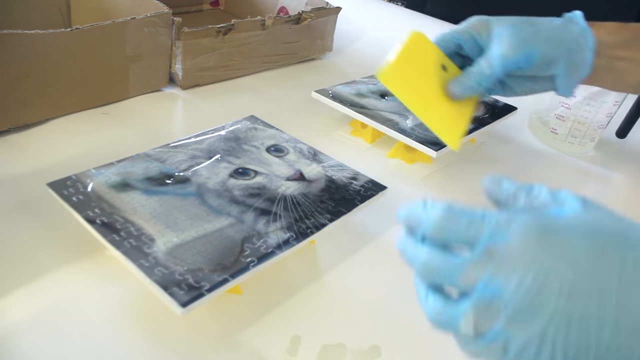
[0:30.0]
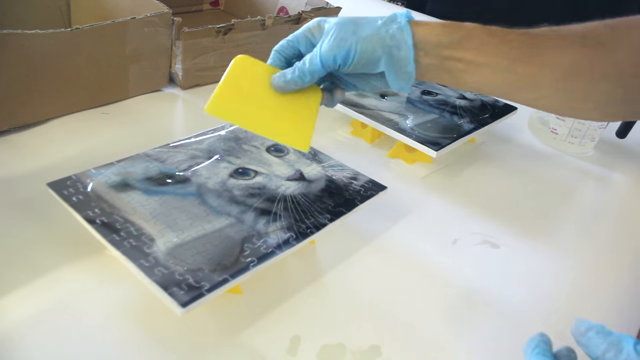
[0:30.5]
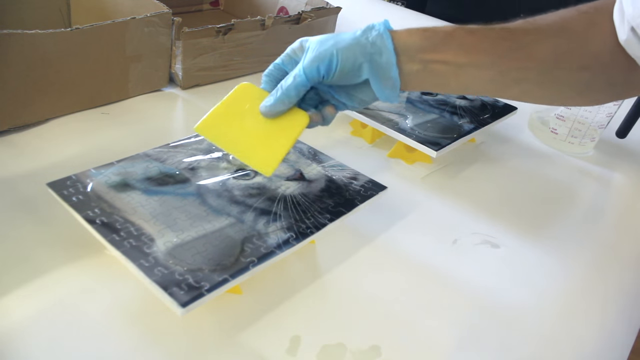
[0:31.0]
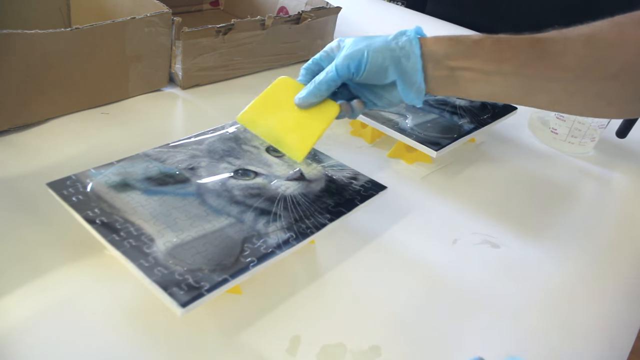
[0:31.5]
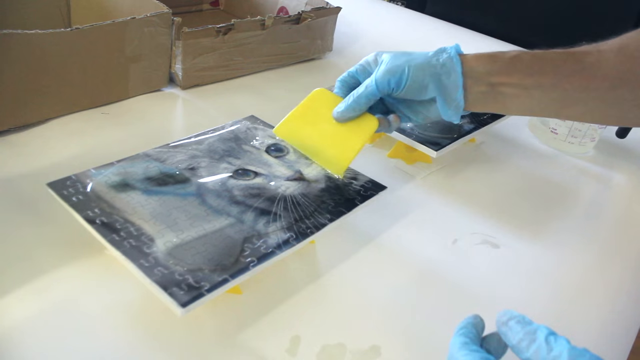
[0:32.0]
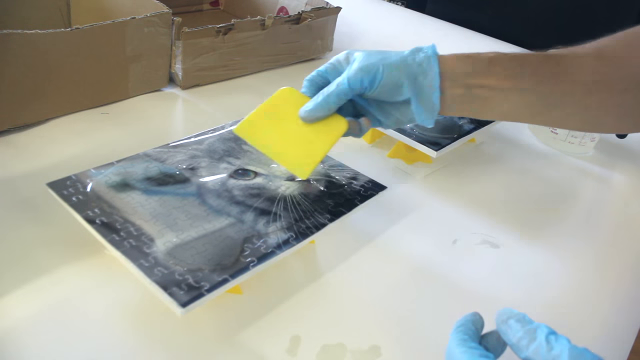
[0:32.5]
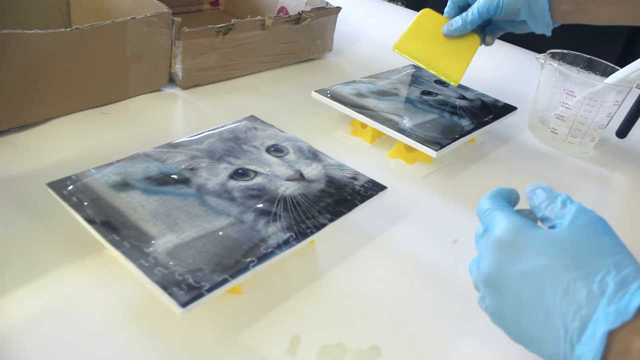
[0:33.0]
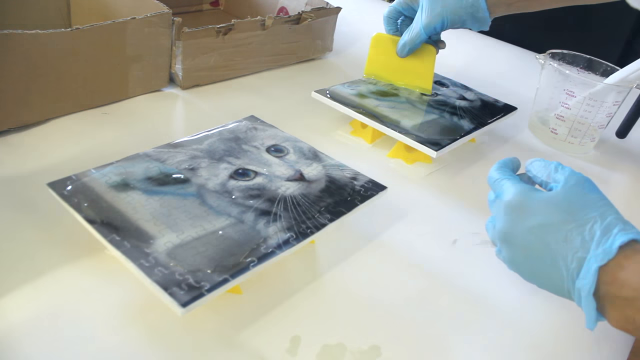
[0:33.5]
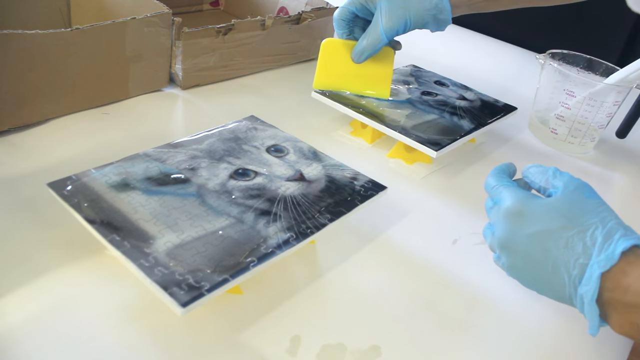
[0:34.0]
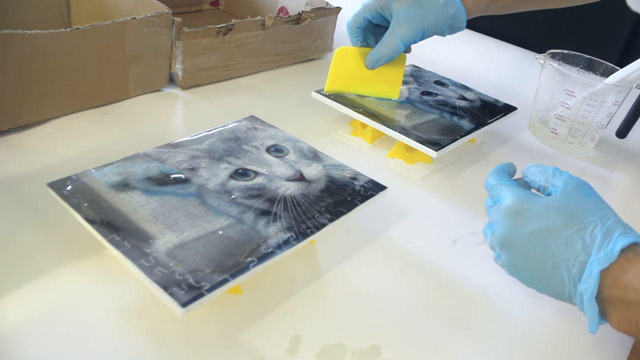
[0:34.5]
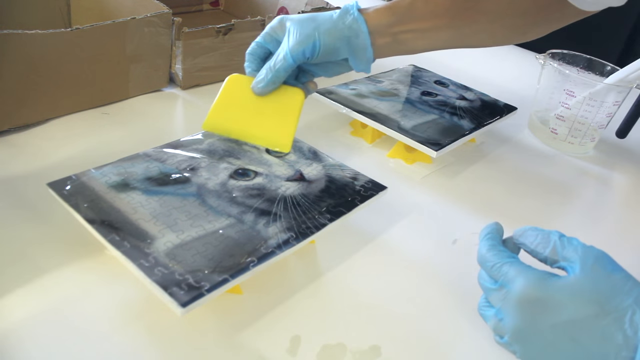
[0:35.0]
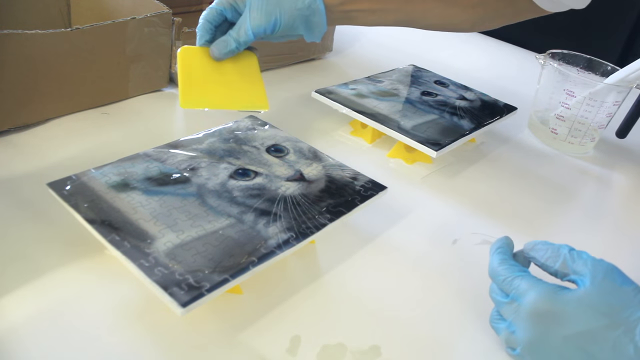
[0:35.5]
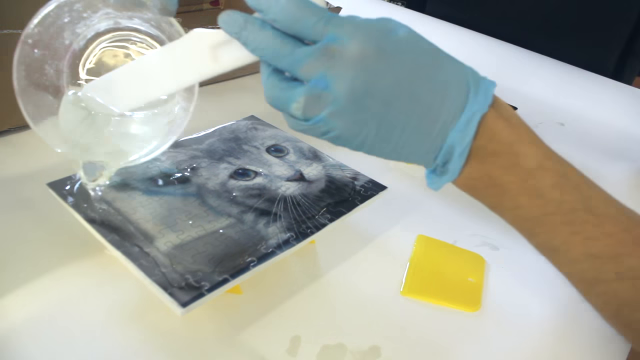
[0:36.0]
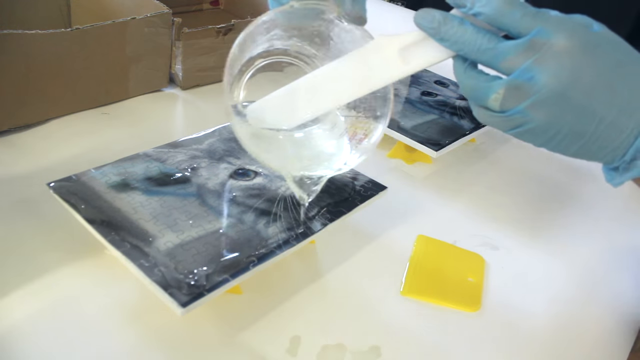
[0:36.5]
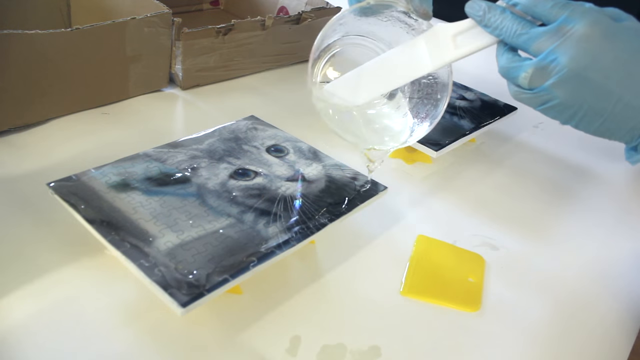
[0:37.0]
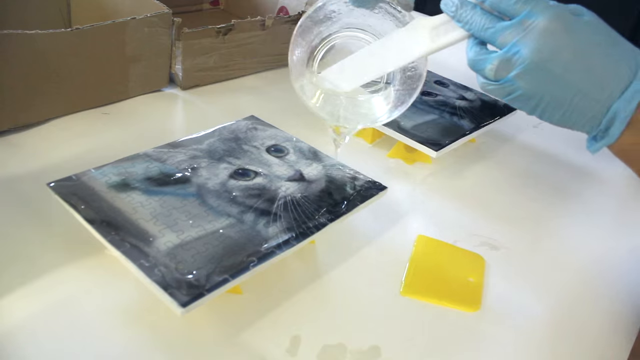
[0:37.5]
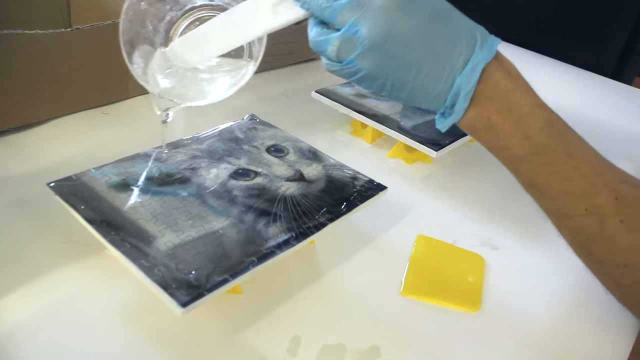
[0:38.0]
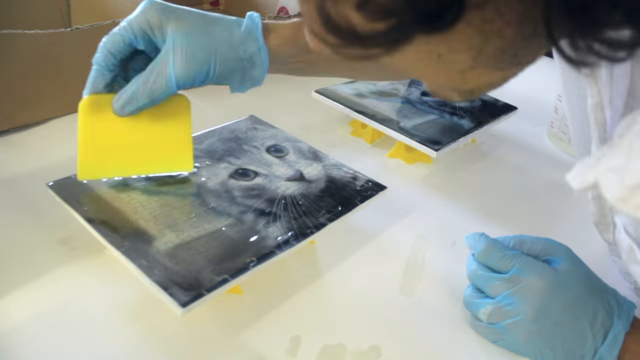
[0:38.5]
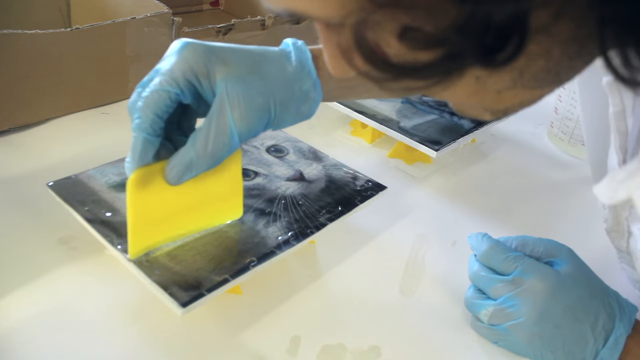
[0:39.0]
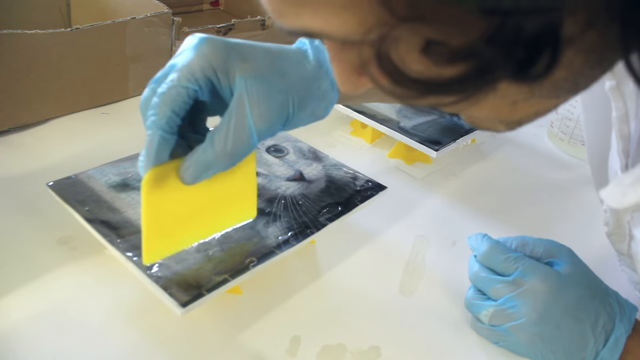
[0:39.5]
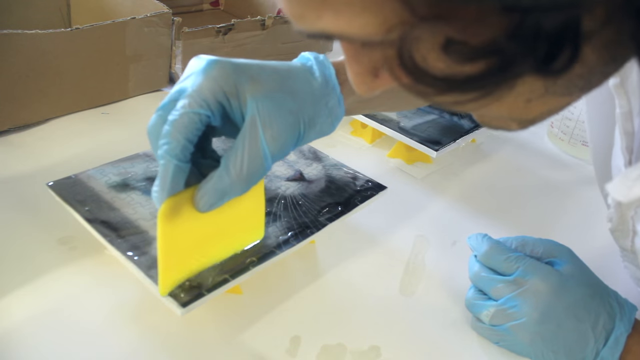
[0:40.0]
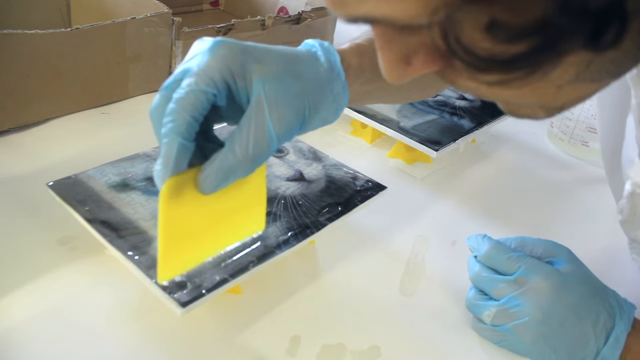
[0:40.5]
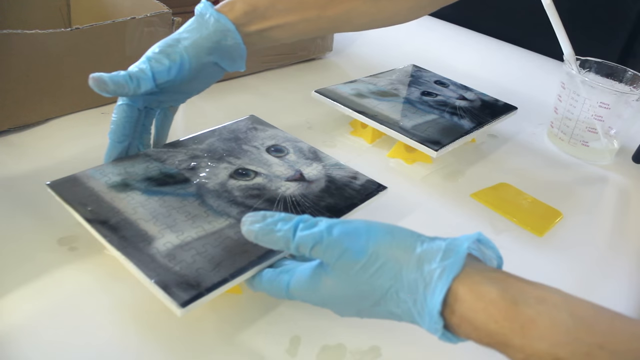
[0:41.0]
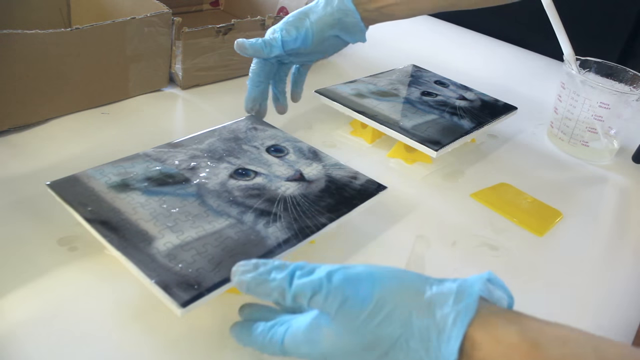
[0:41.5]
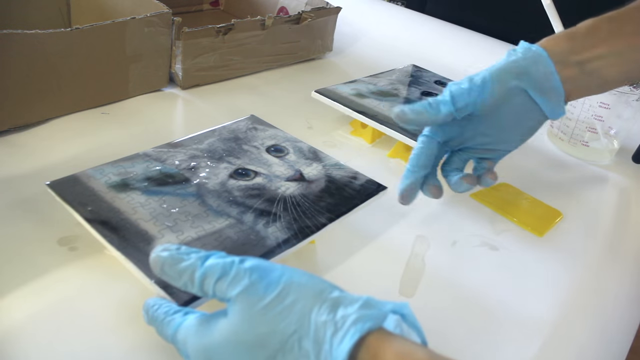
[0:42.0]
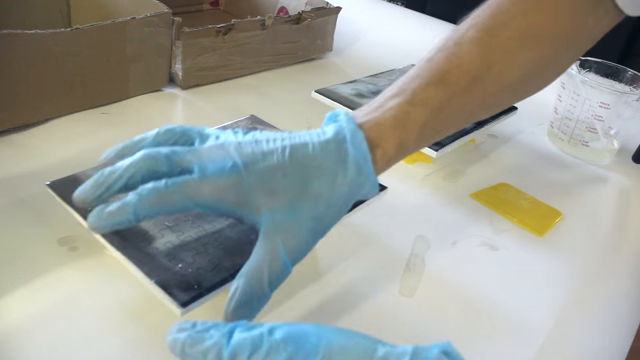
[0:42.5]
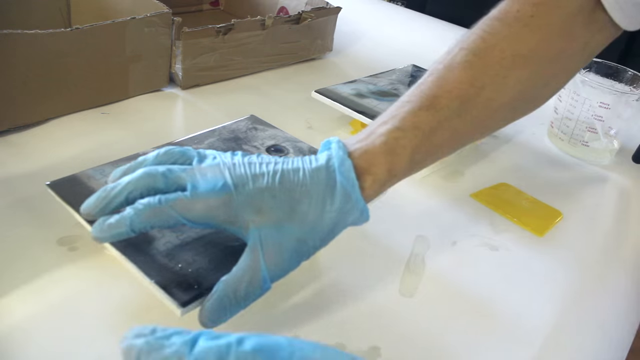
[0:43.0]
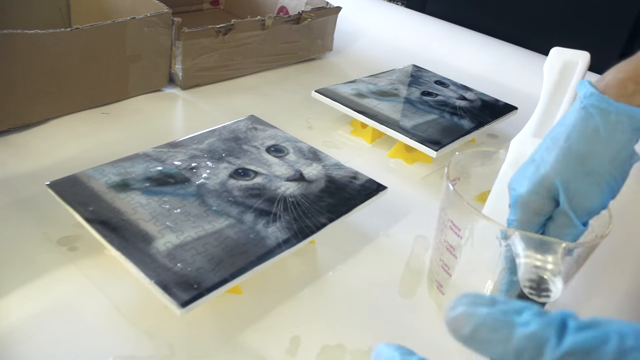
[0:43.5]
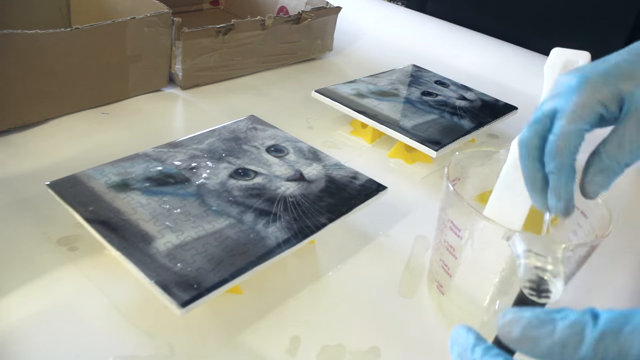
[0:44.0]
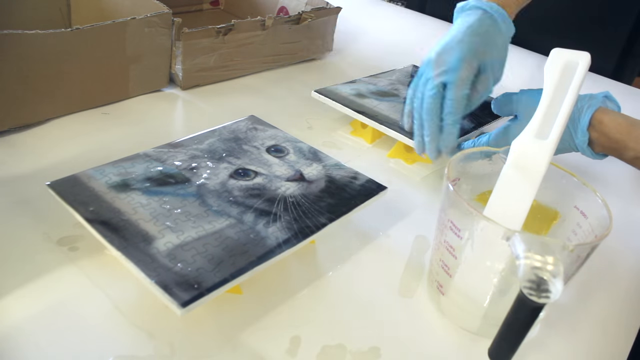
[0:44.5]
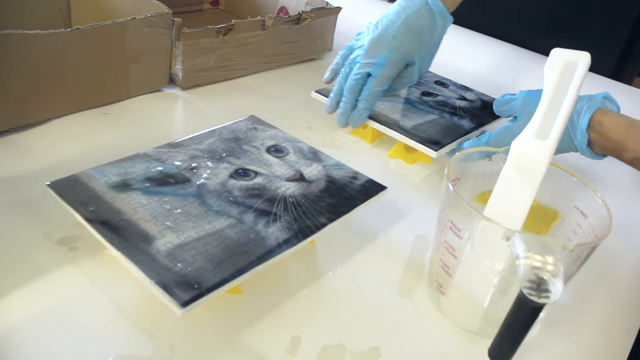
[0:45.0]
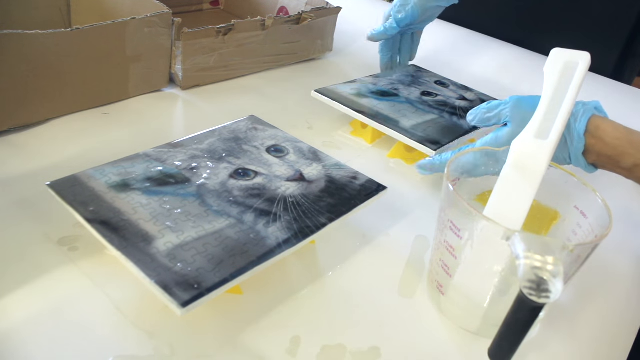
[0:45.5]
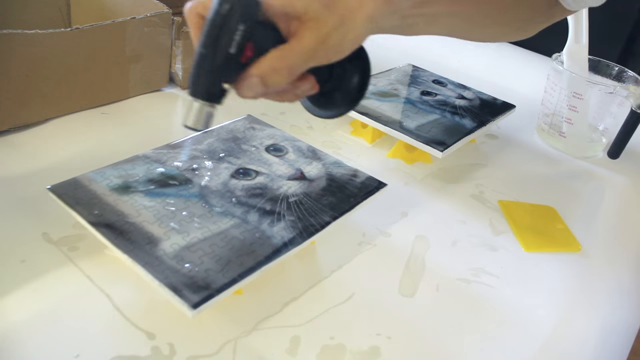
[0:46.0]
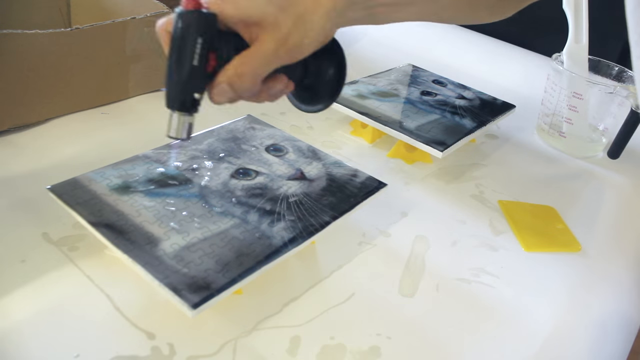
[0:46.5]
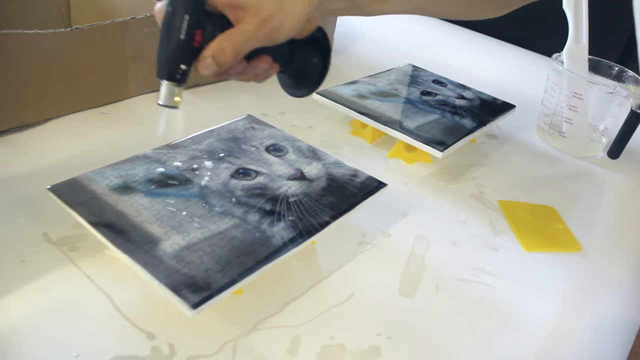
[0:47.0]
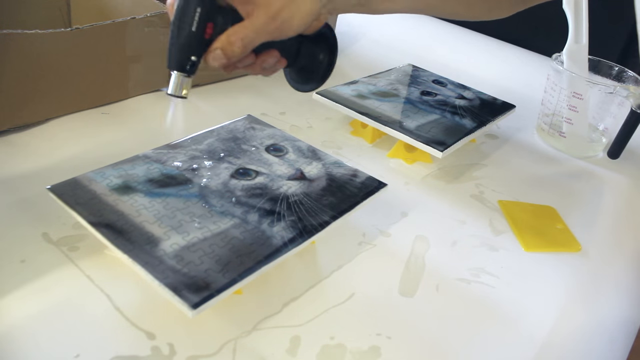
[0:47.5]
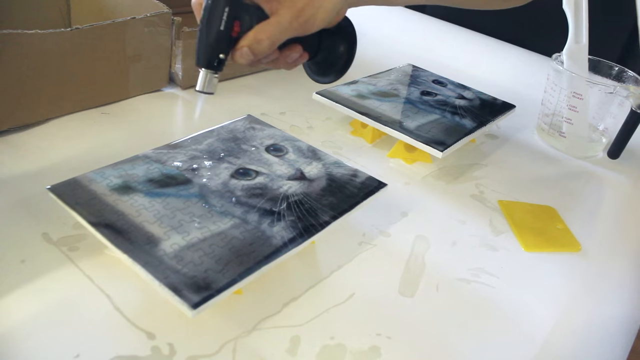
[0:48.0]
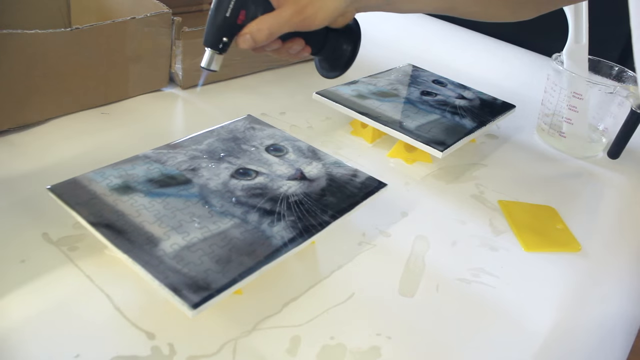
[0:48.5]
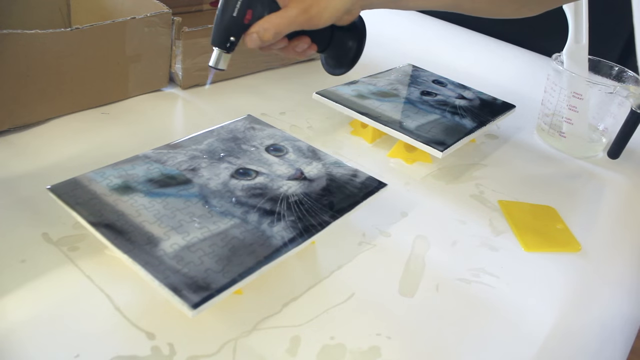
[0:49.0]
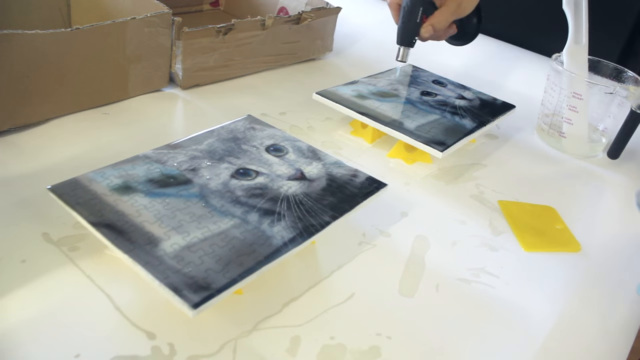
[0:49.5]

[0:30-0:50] The white man, still wearing blue gloves, takes a spray and sprays the two cat frames, which are black, white and gray. He rubs the frame with a yellow sponge, working patiently and slowly, and uses a jar with water. The substance he applies is not exactly water and looks like glue. The sprayer is black with silver. The table is white, and in the back there are two brown cardboard boxes.